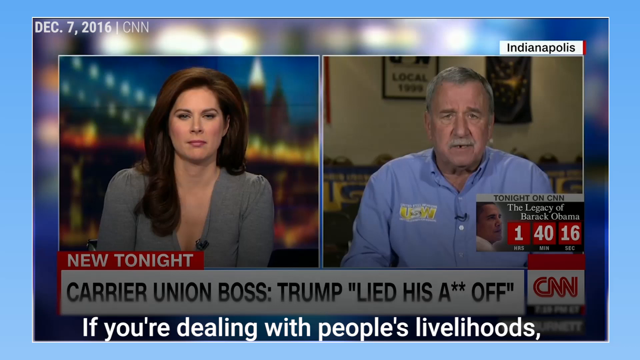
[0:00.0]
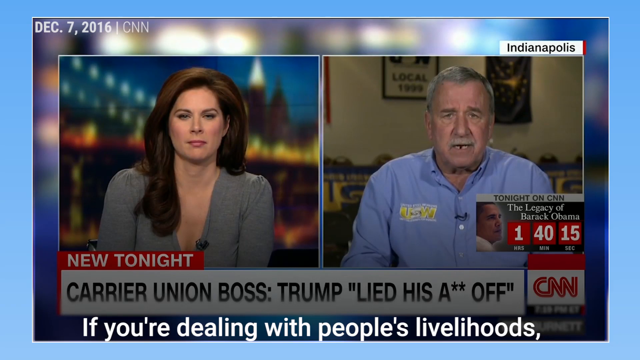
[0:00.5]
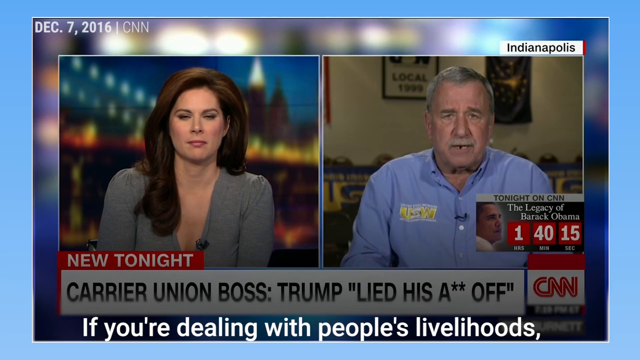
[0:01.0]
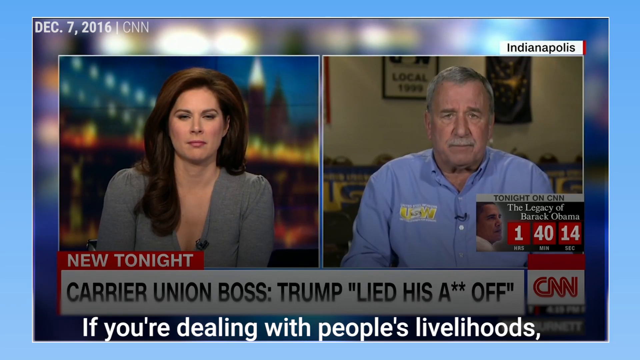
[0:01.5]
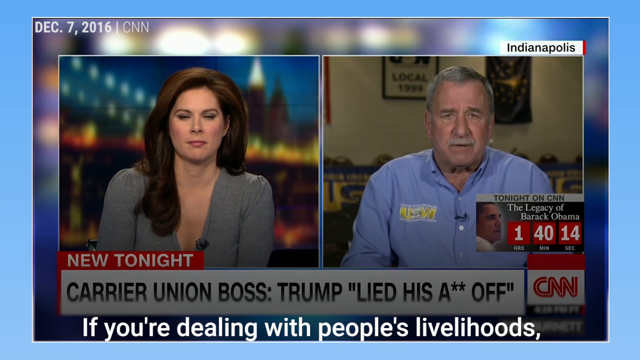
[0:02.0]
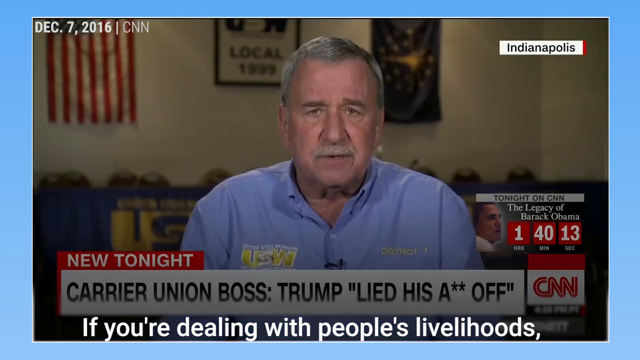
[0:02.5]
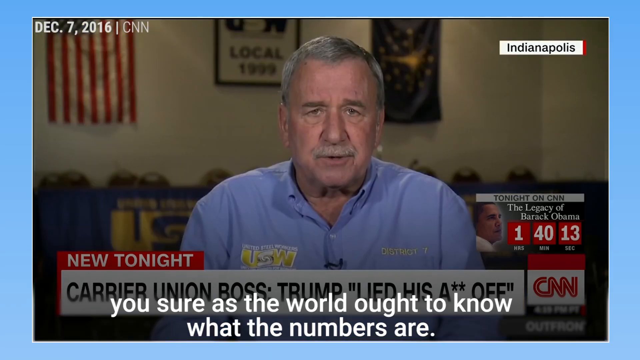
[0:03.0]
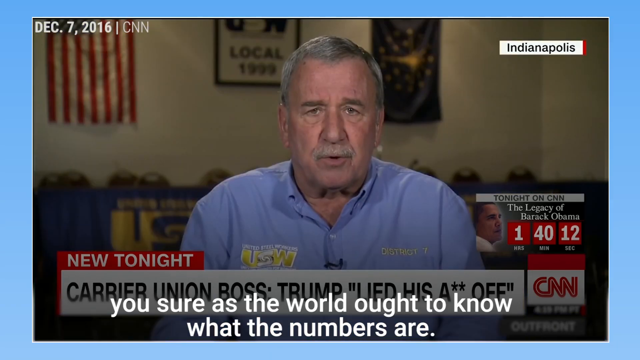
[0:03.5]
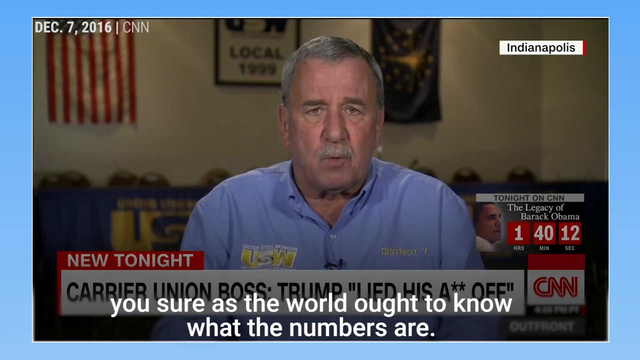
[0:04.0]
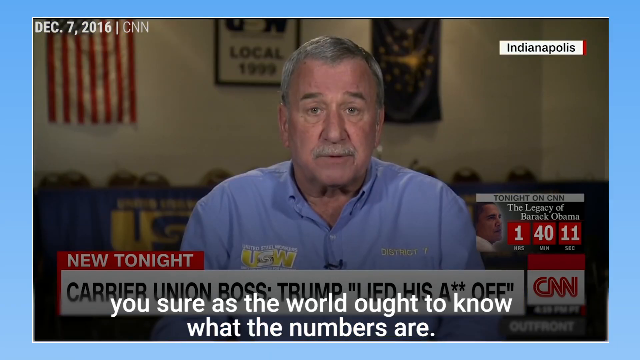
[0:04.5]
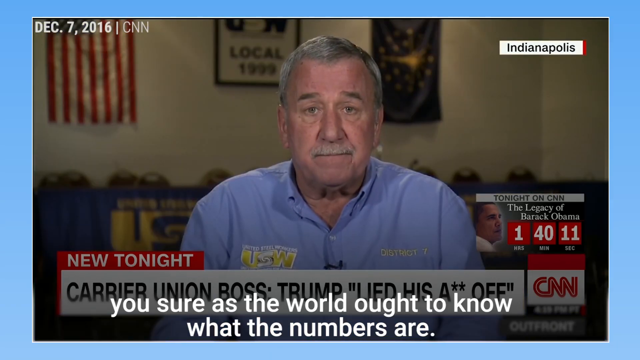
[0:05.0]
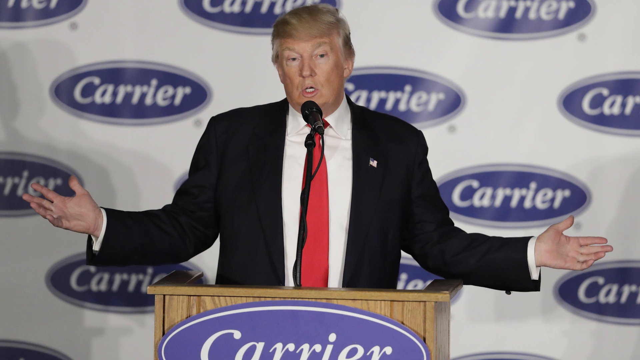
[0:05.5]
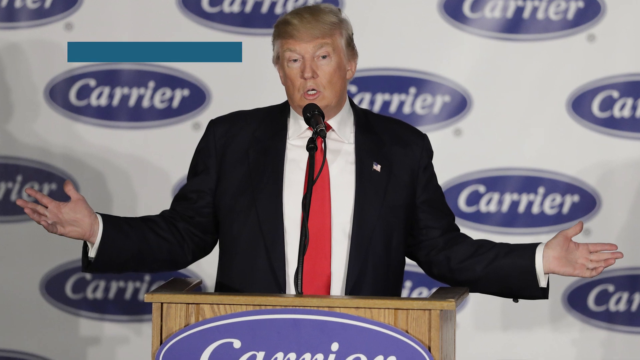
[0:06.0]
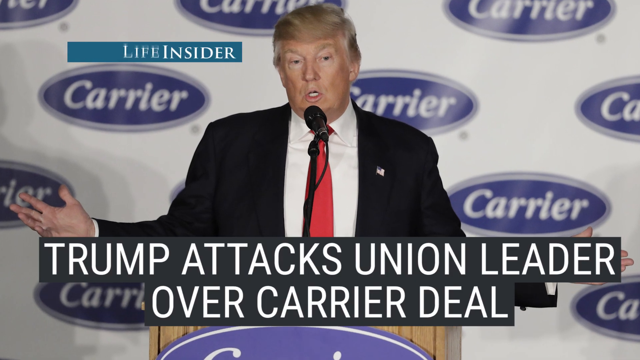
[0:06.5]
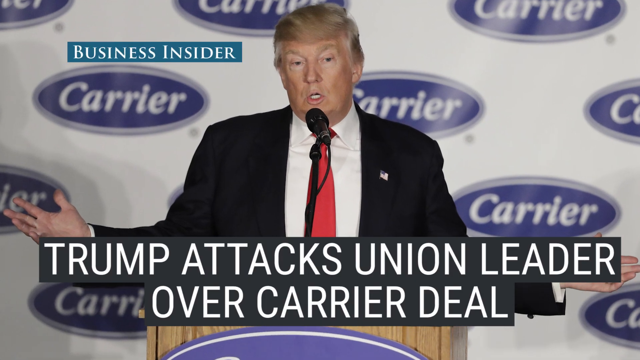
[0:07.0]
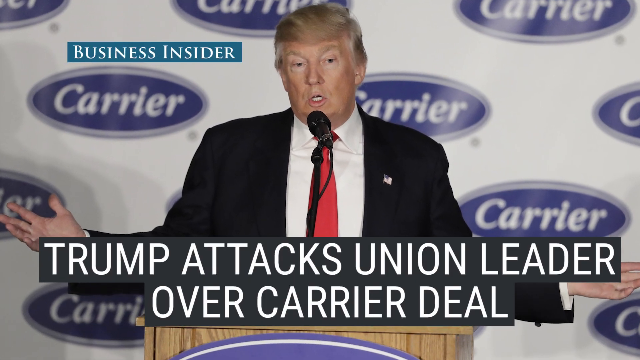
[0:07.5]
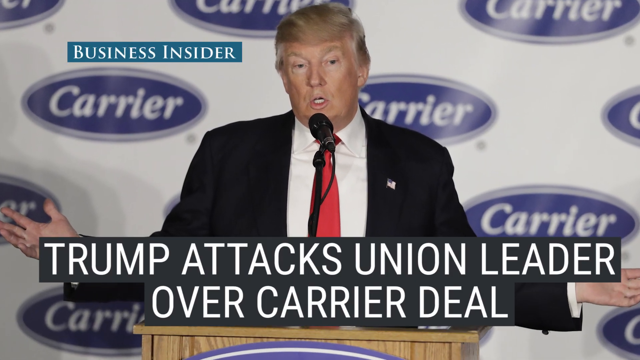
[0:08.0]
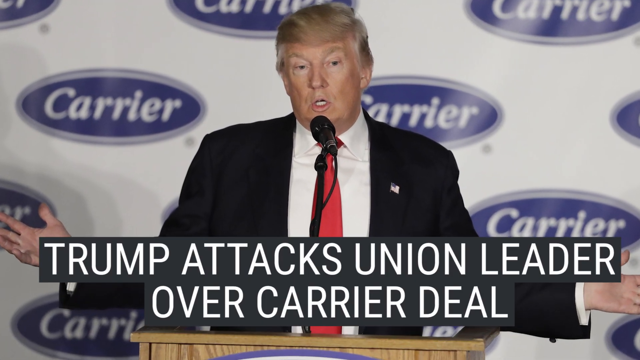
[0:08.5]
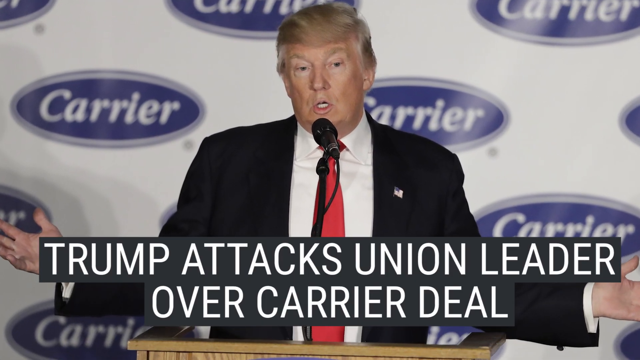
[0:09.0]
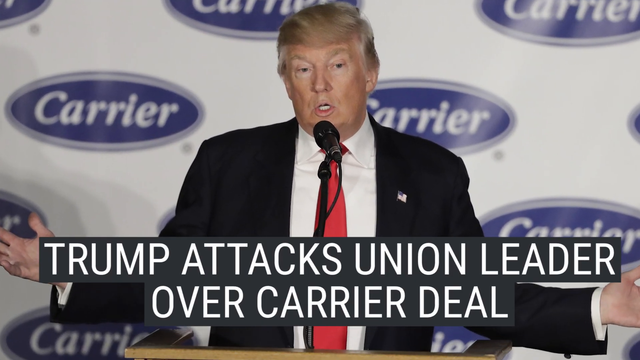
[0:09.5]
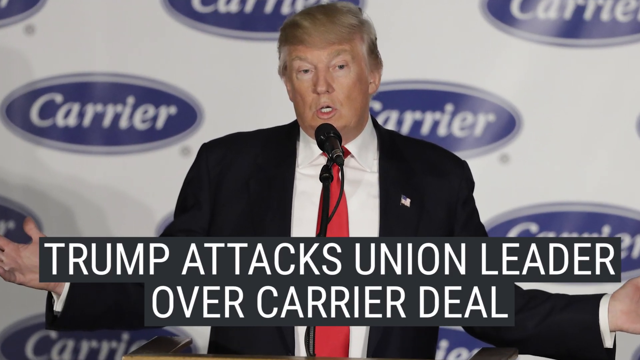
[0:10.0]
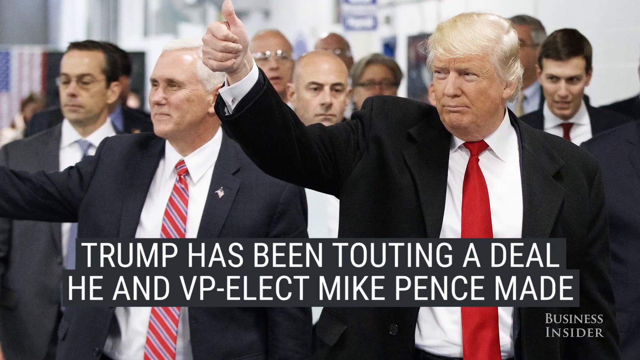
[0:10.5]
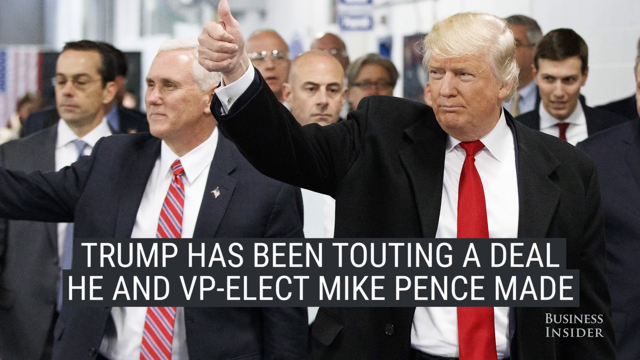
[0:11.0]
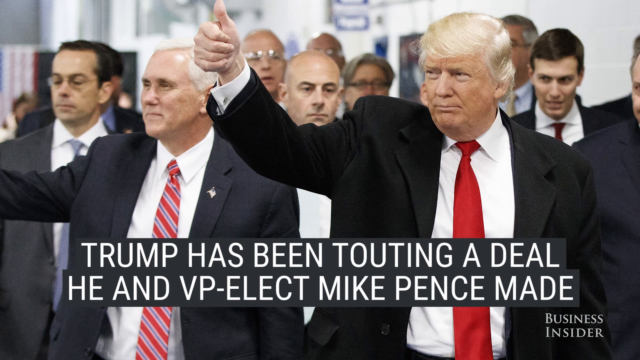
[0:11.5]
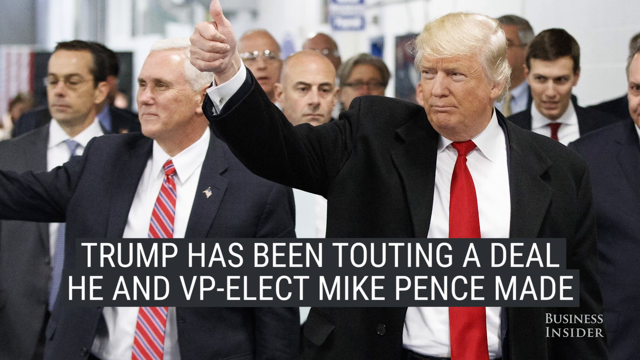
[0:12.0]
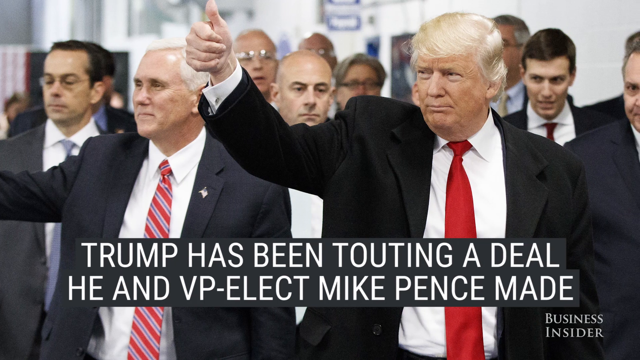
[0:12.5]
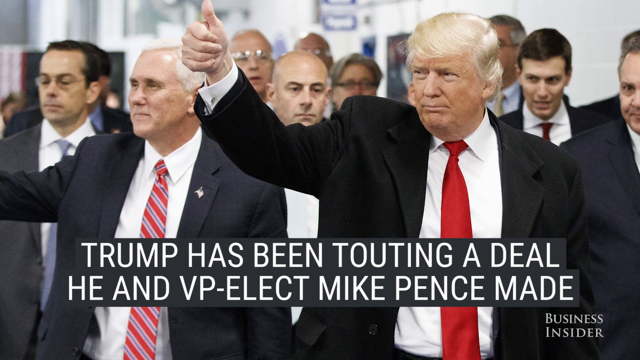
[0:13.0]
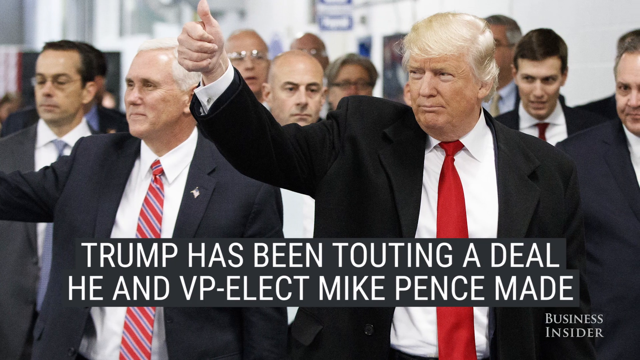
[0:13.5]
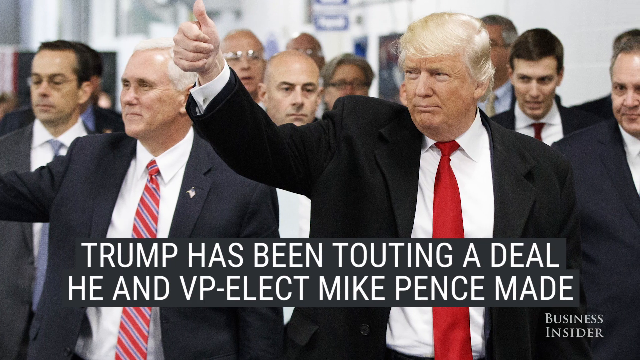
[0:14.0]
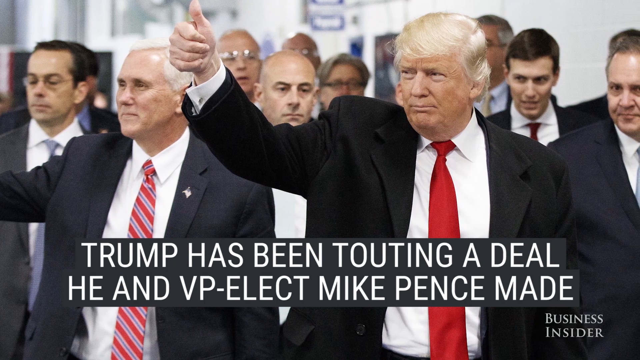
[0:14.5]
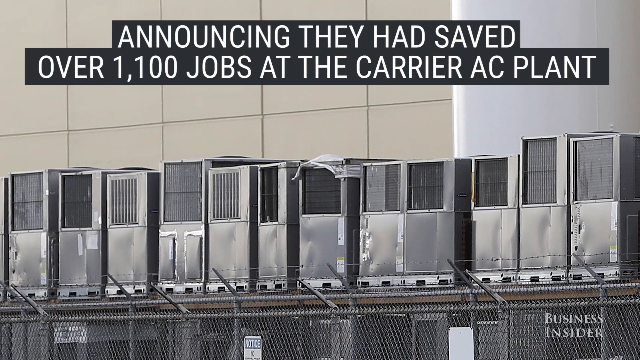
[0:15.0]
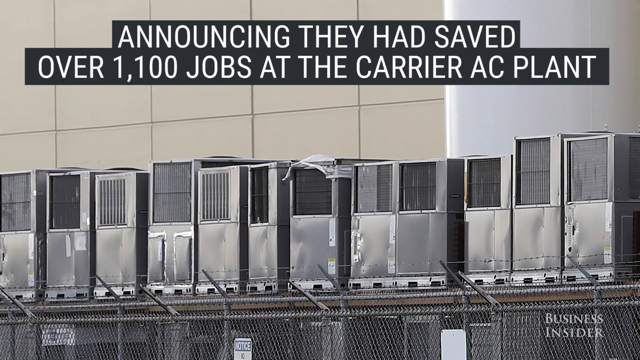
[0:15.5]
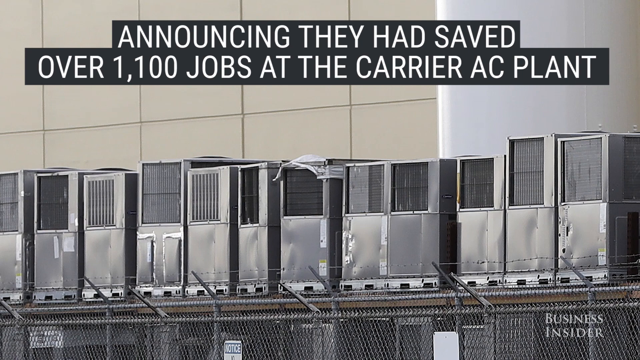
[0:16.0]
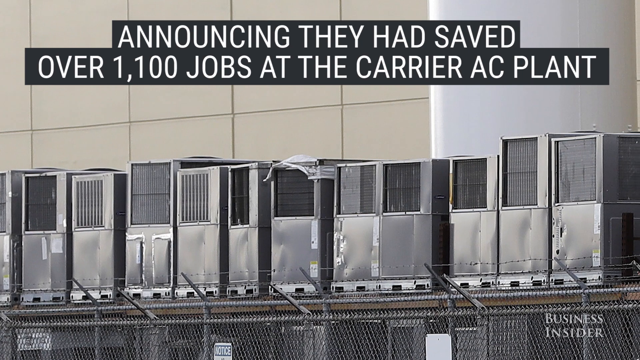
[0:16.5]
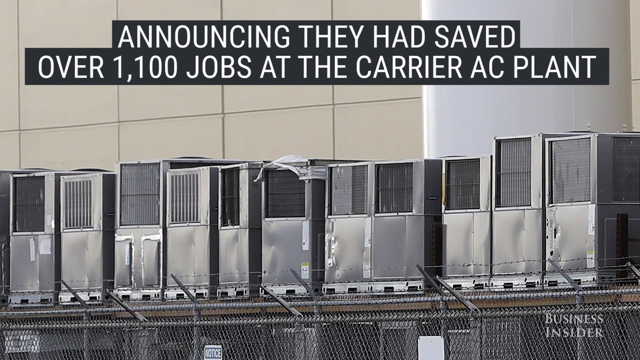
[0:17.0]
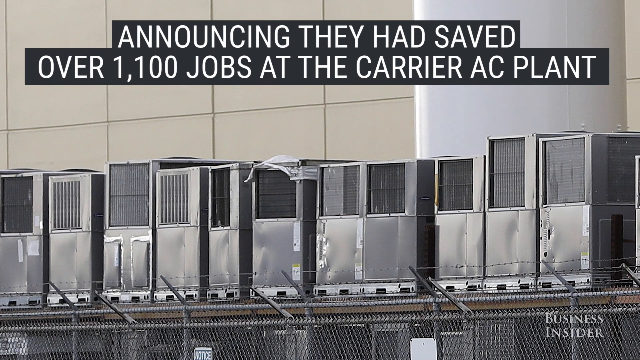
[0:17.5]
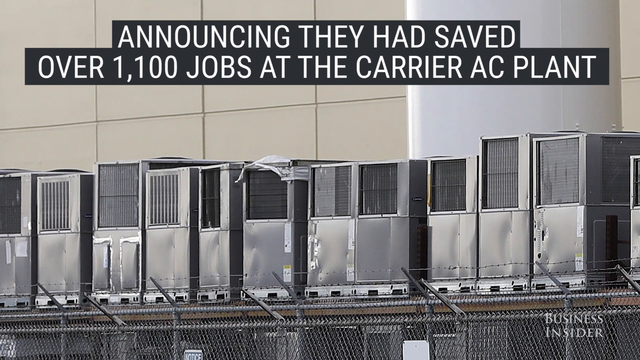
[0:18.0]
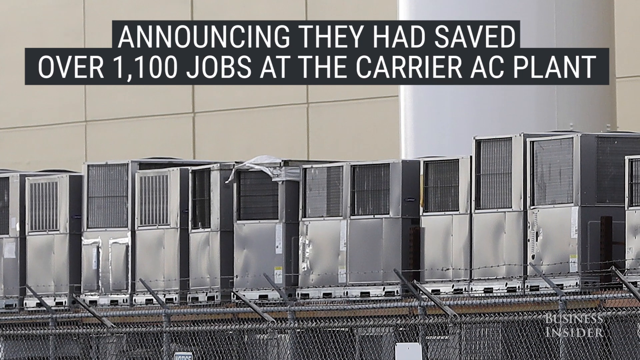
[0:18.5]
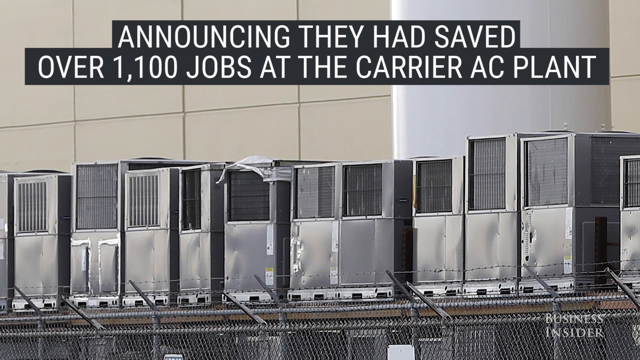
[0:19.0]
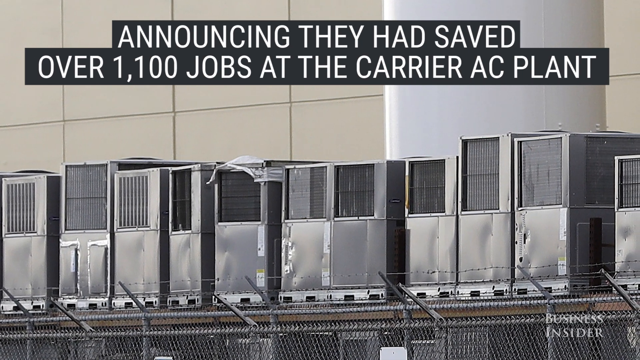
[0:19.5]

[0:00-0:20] The footage appears to come from the network CNN, whose logo is at the far bottom right in red text reading "CNN." An apparent news graphic at the bottom reads "new tonight carrier union boss Trump lied," and white text at the very bottom reads "if you're dealing with people's livelihoods you sure as the world ought to know what the numbers are." On the far left is what appears to be a CNN hostess with brown hair, wearing a gray dress with a mic near her left shoulder. On the far right is a middle-aged Caucasian man with gray hair in a long light blue sleeve. A date at the top left reads "December 7th, 2016, CNN," and "Indianapolis" appears on the upper right side.